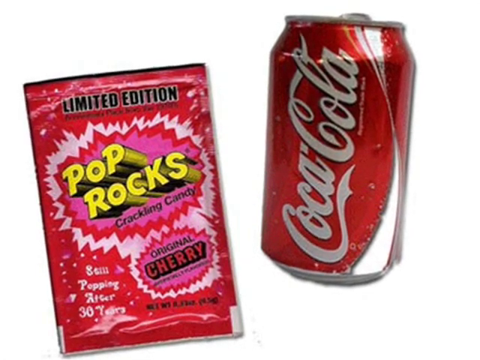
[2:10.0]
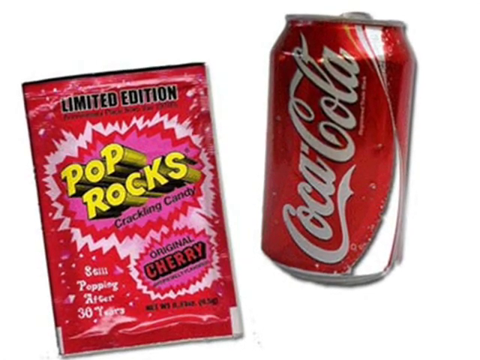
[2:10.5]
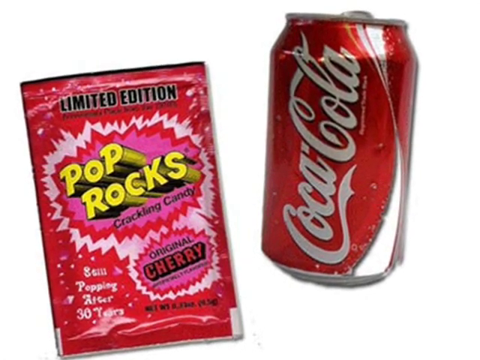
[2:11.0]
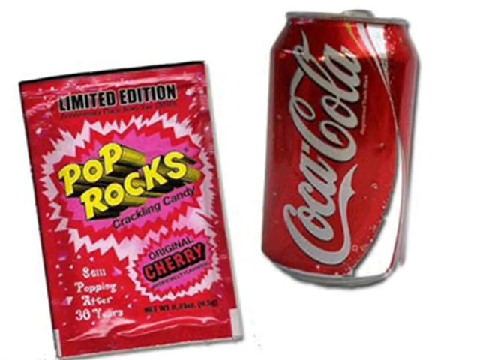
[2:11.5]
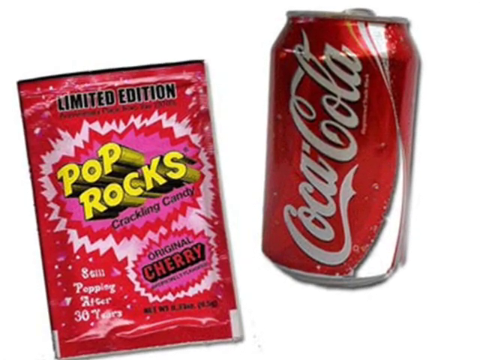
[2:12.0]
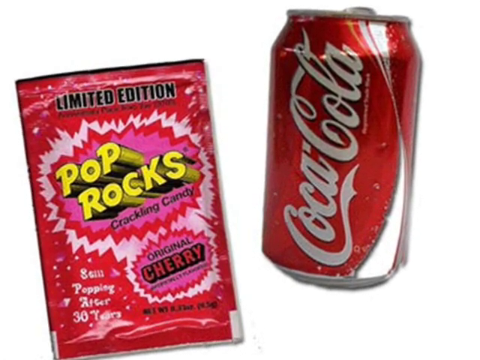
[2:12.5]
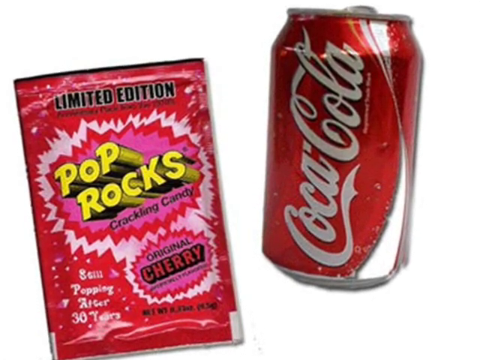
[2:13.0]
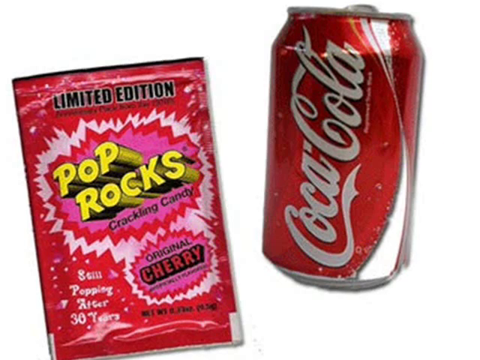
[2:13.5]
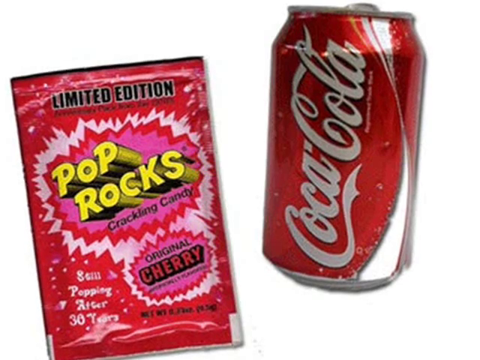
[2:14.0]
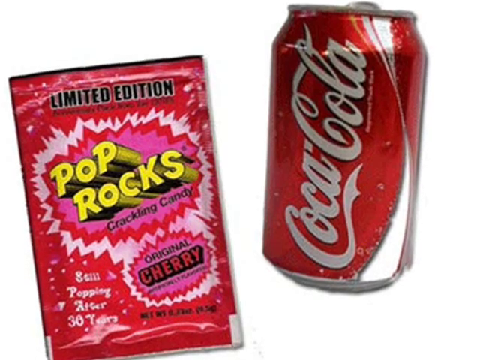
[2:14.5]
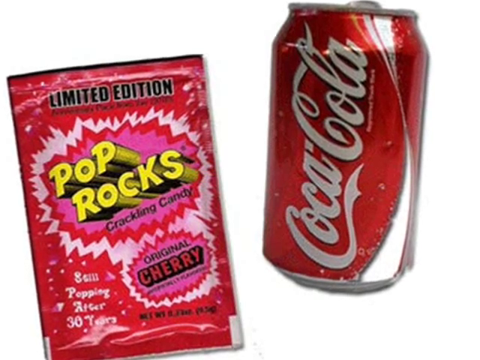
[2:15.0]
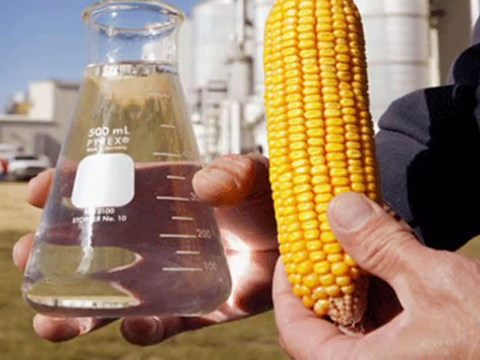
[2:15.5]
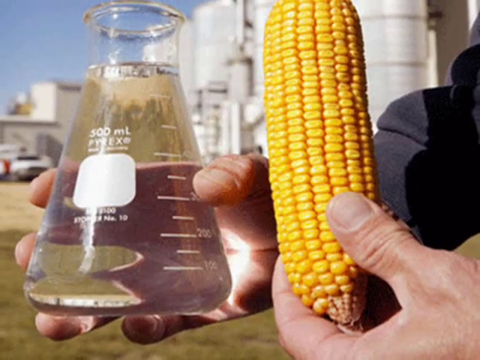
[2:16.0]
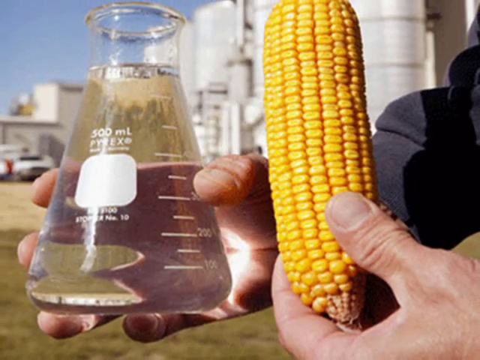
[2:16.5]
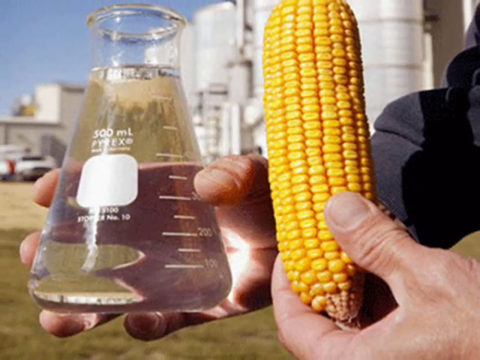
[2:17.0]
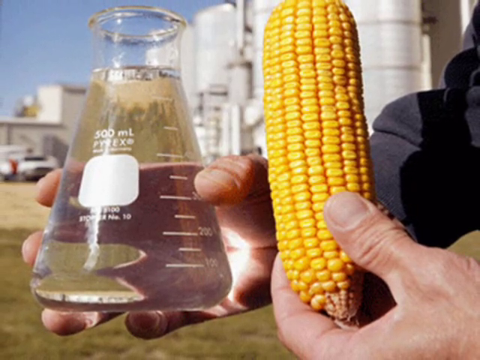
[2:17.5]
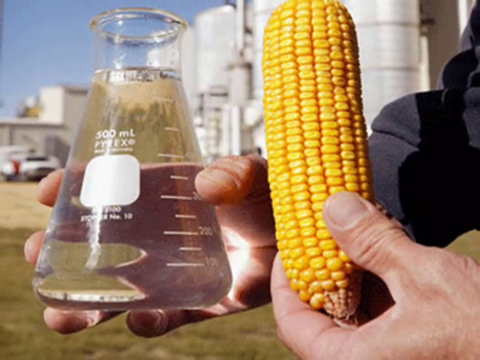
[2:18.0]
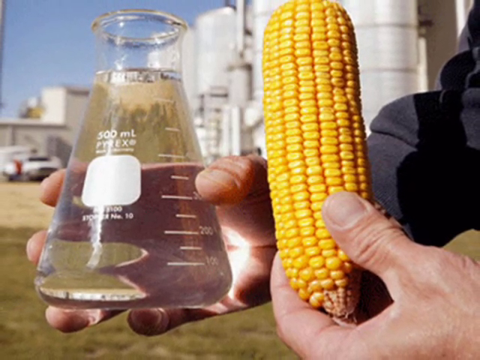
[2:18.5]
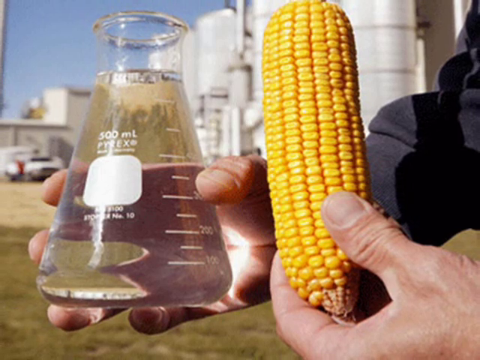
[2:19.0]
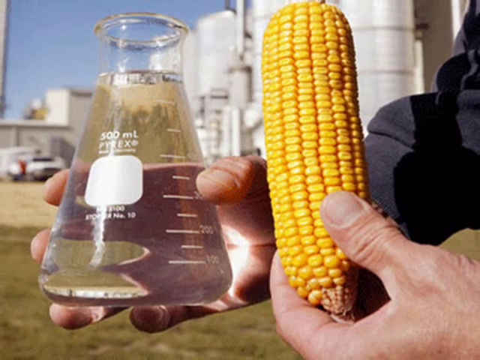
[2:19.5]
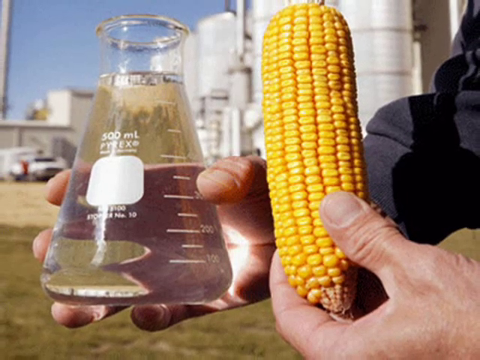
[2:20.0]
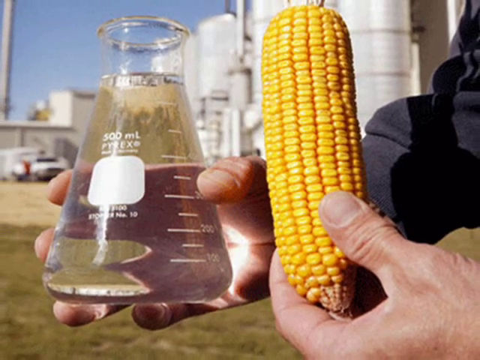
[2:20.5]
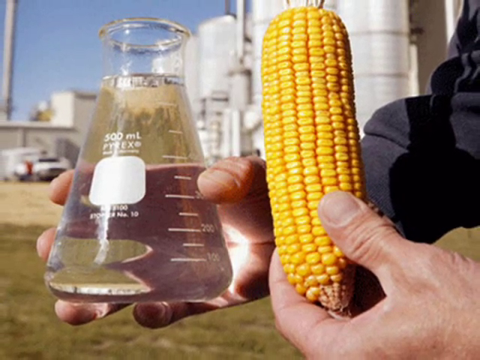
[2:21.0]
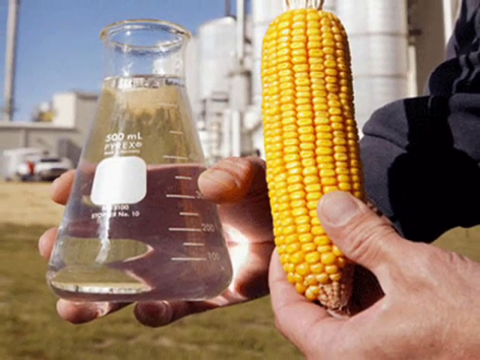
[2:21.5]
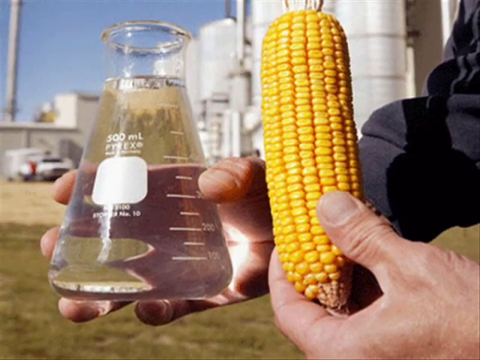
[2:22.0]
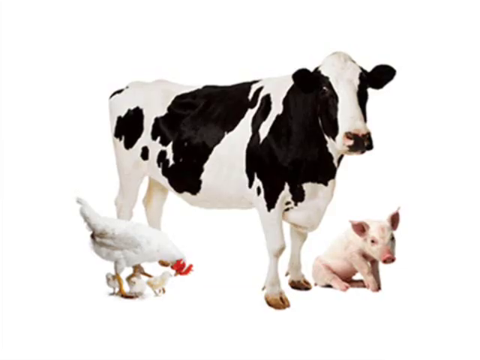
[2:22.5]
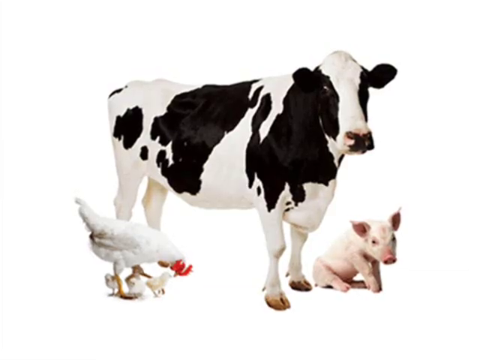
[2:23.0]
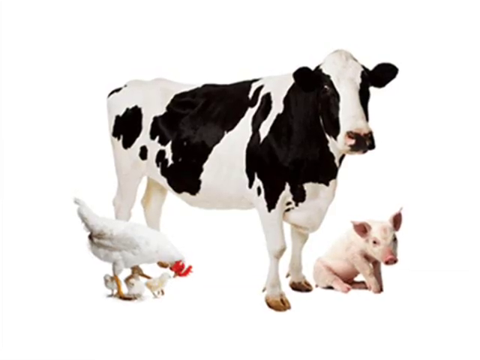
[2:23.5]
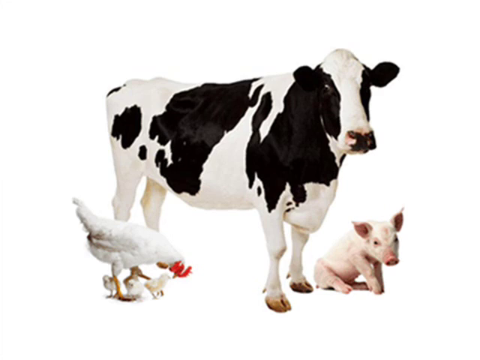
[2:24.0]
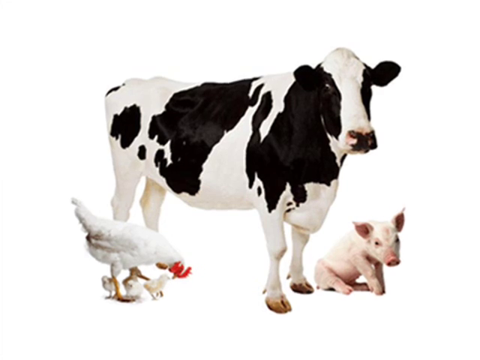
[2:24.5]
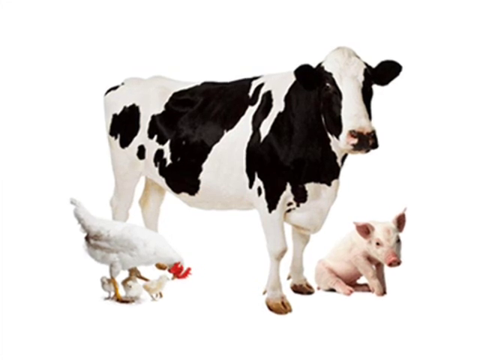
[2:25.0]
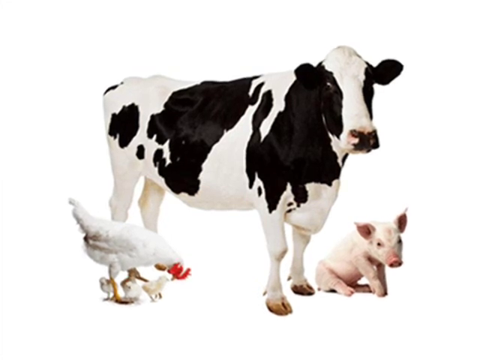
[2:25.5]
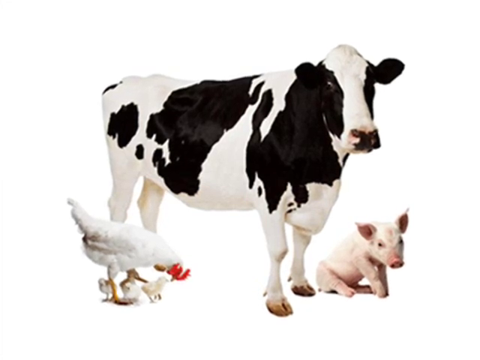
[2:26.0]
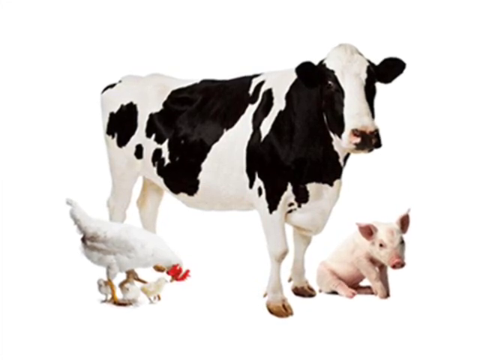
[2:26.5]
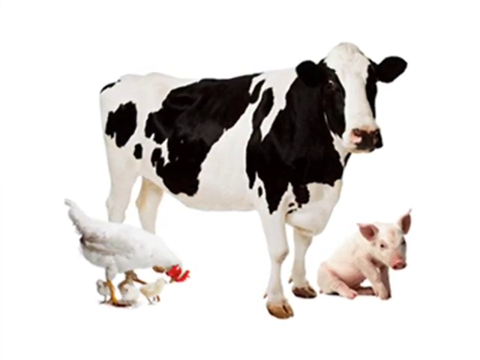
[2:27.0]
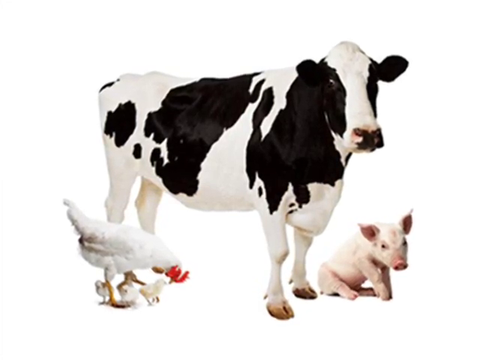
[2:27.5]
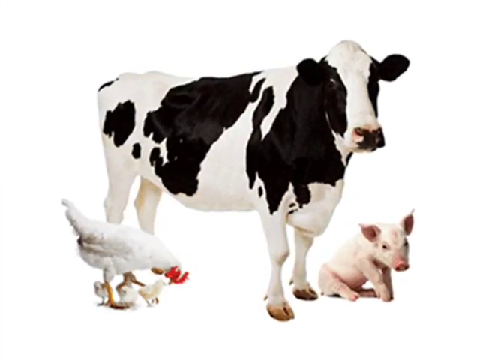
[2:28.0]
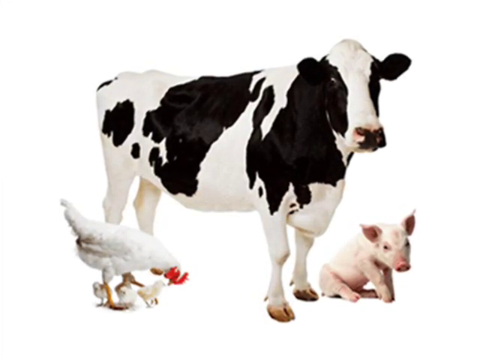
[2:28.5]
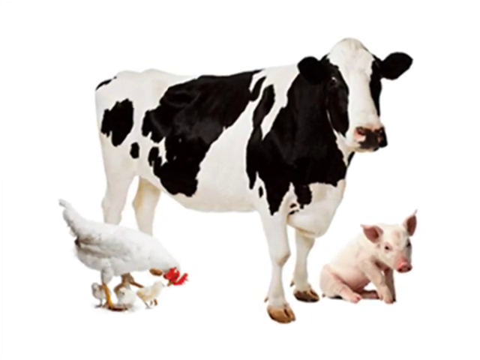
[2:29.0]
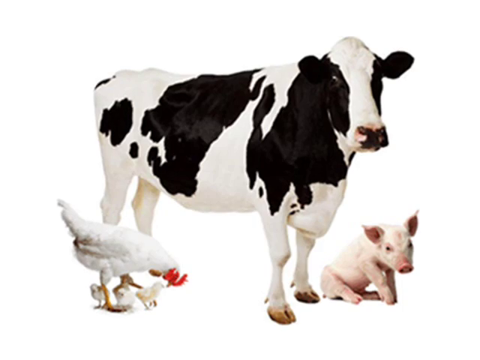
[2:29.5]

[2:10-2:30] The Coca-Cola can and limited edition cherry Pop Rocks candy are still shown. Then a person holds an ear of corn on the cob, with their thumb visible, next to a vase of liquid that looks like it could be water, shown zoomed in. In the background a vehicle is visible, and possibly some silos. Next, a cow, a pig, a chicken, and some chicks appear photoshopped onto a white background that is dark at the bottom. The cow and the pig are looking at the camera, and the chicken is looking down at its chicks. The view kind of zooms in on that image.